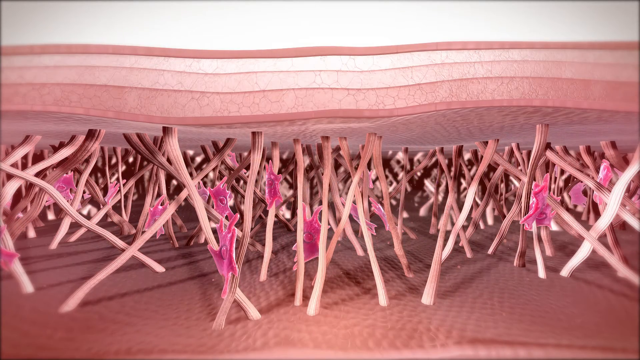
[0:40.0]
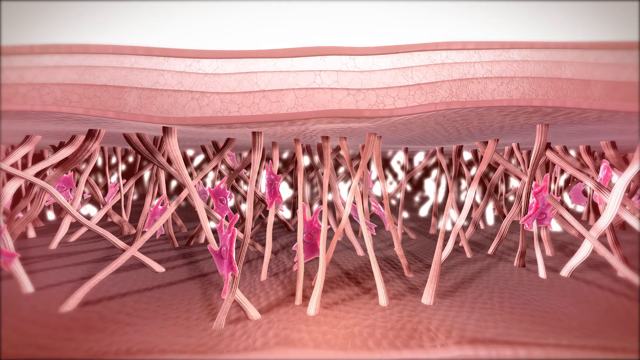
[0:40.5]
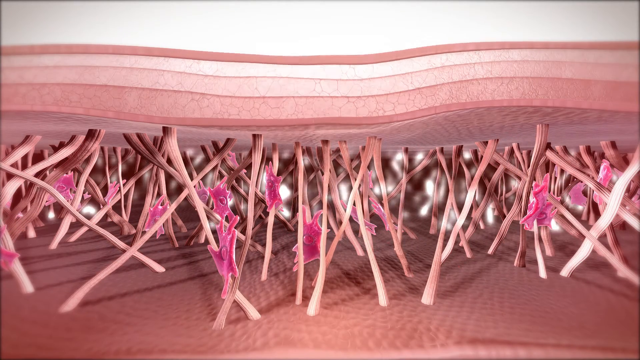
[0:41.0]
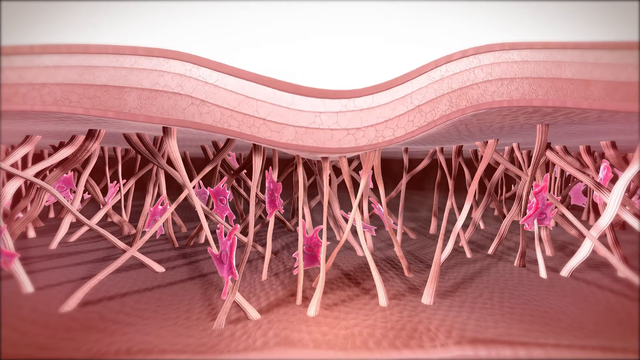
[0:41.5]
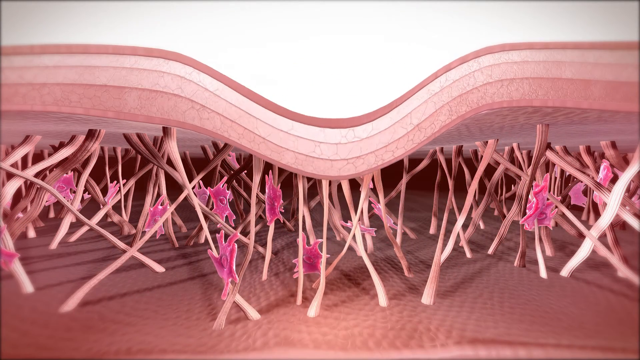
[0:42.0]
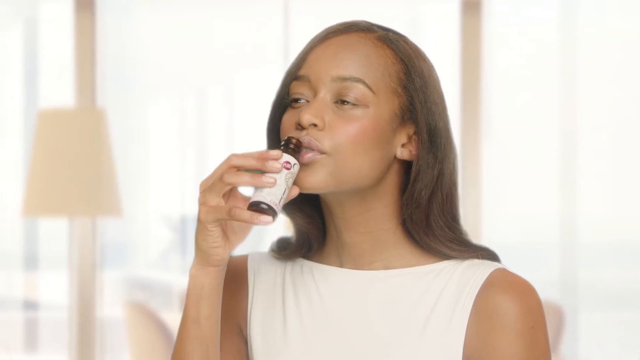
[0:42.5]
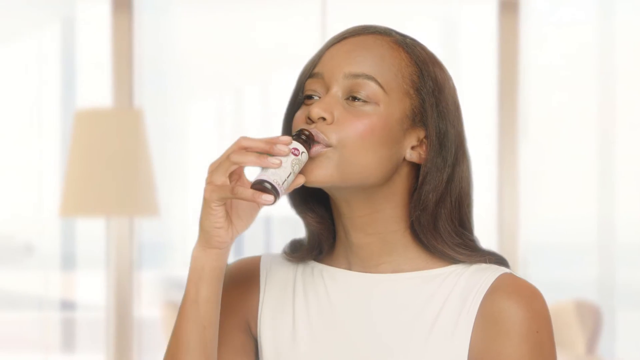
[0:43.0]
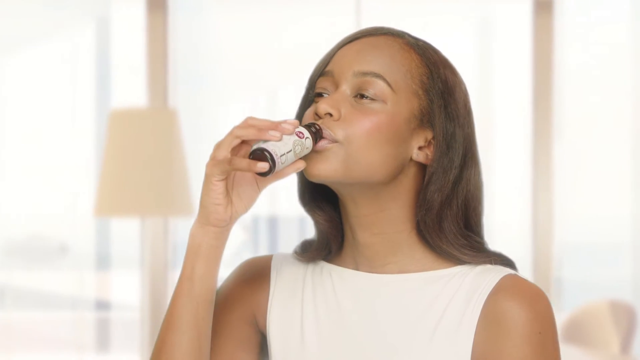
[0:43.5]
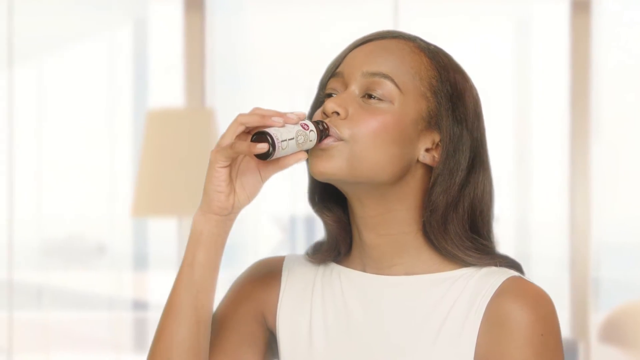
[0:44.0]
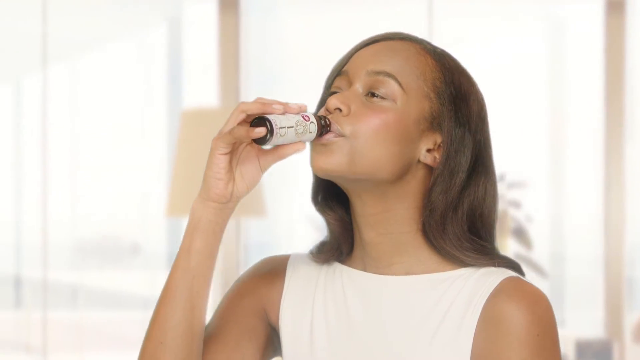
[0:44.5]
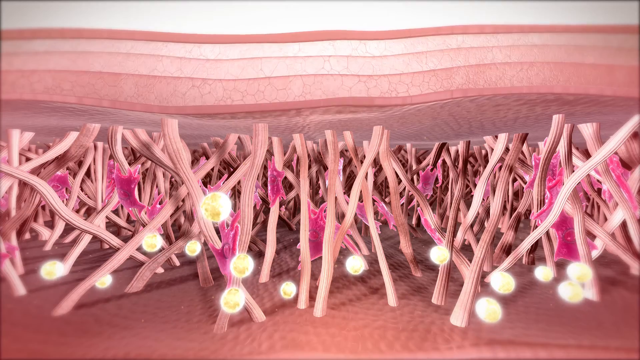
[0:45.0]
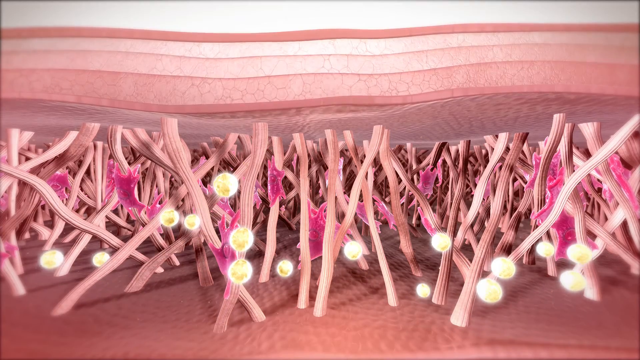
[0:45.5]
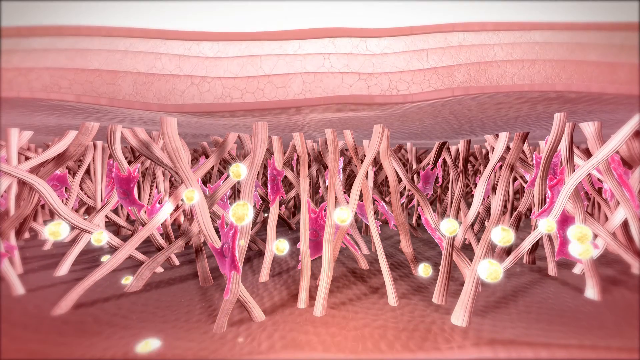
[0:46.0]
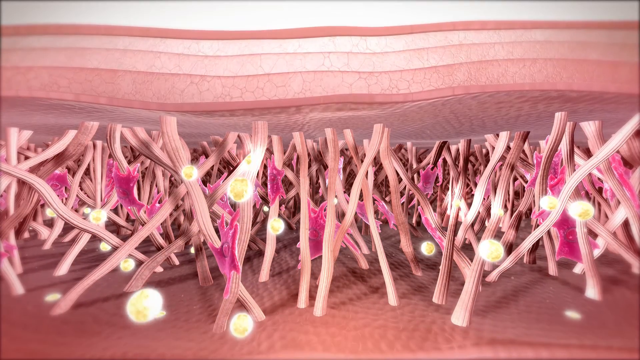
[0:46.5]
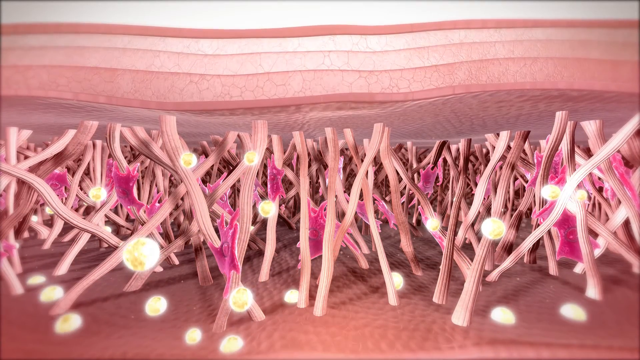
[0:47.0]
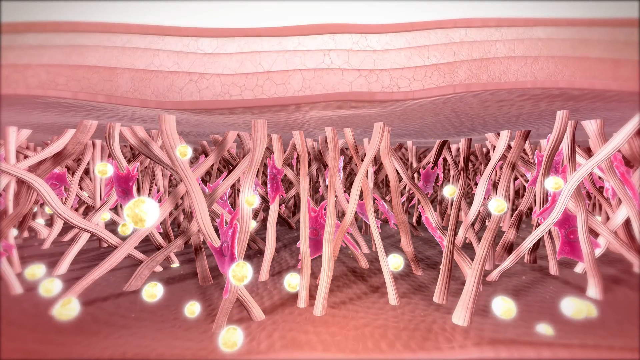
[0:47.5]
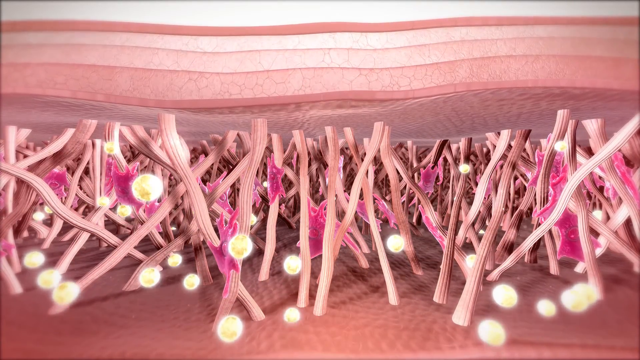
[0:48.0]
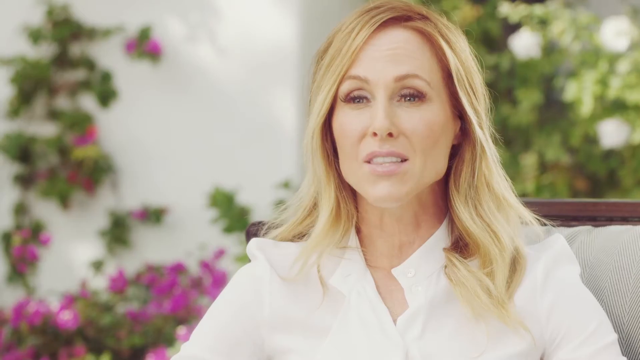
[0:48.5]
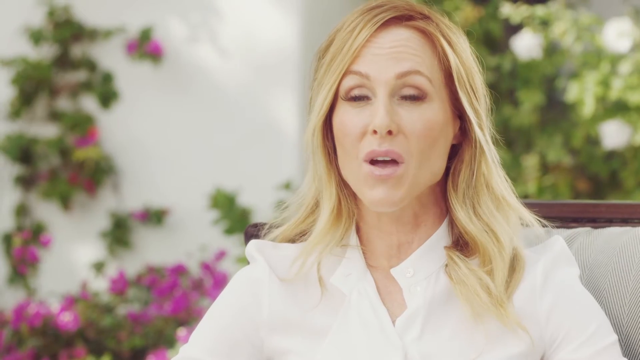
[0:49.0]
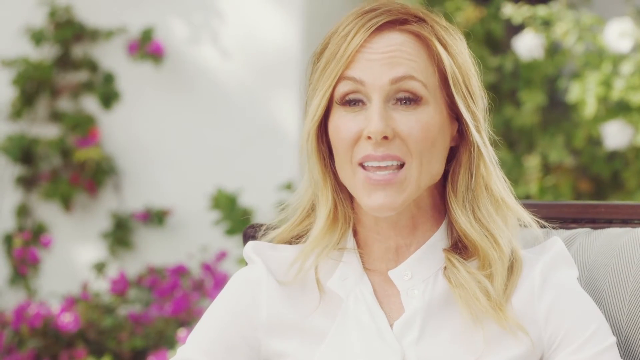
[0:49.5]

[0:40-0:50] The video shows what happens when the product is taken into the system. The black lady takes the potion, and it is shown flowing into her system, apparently bringing down a barrier and making the skin look fresh and nourished. Sarah is still shown speaking a little. A lady with very long hair appears.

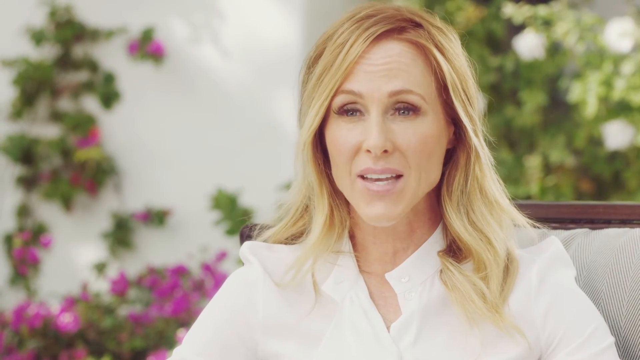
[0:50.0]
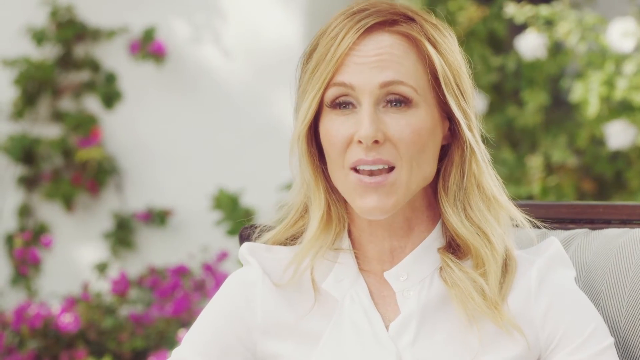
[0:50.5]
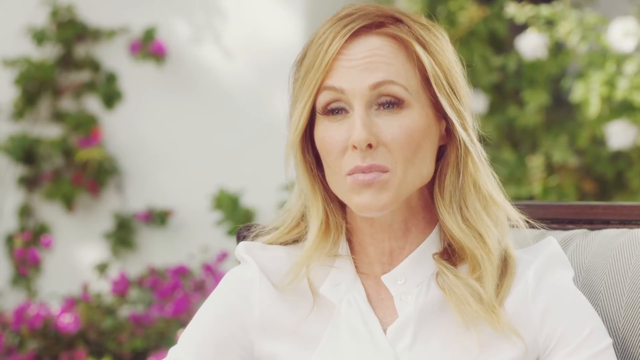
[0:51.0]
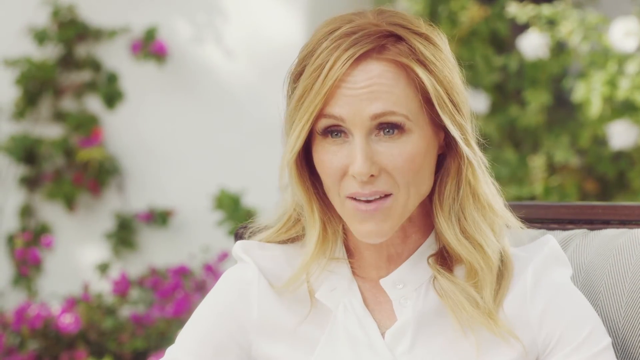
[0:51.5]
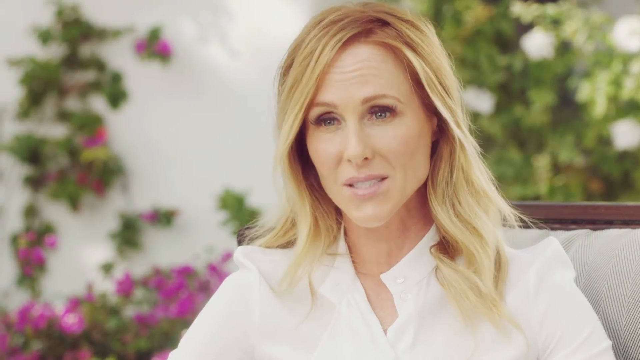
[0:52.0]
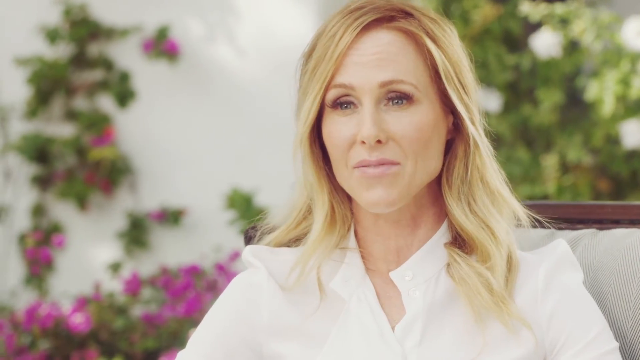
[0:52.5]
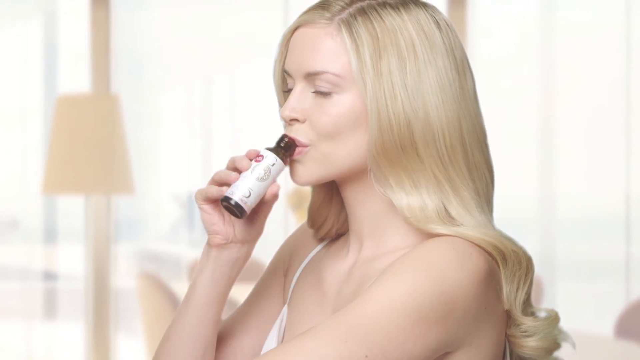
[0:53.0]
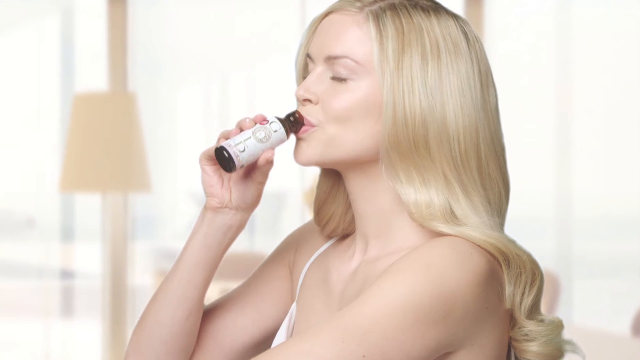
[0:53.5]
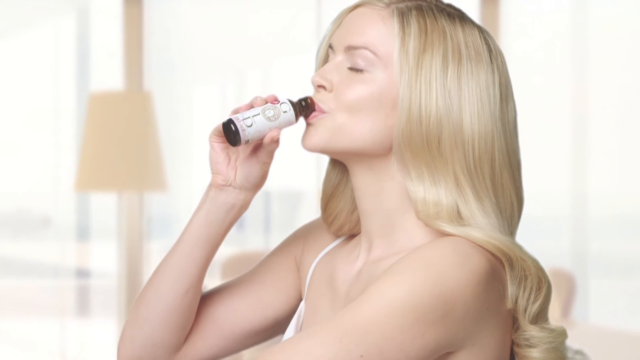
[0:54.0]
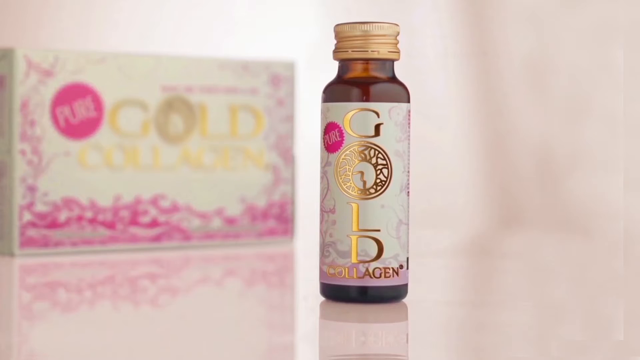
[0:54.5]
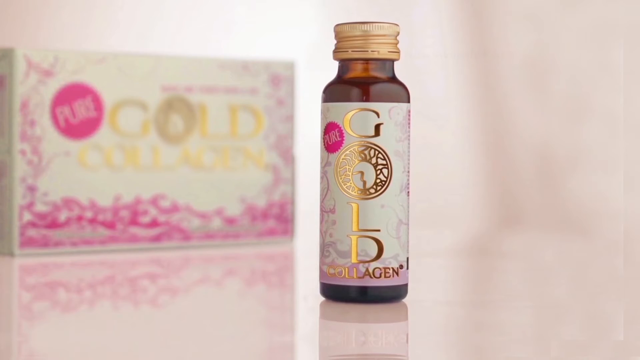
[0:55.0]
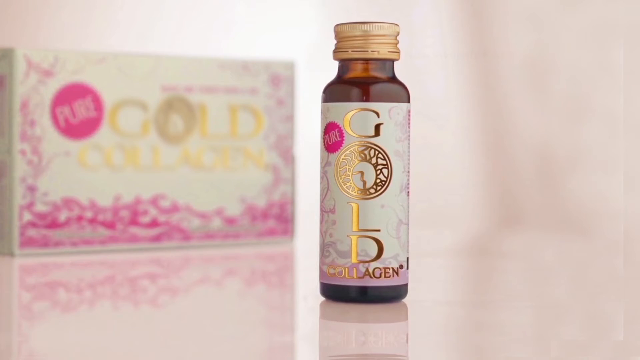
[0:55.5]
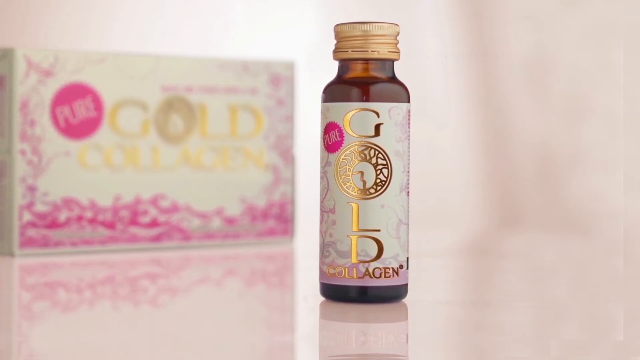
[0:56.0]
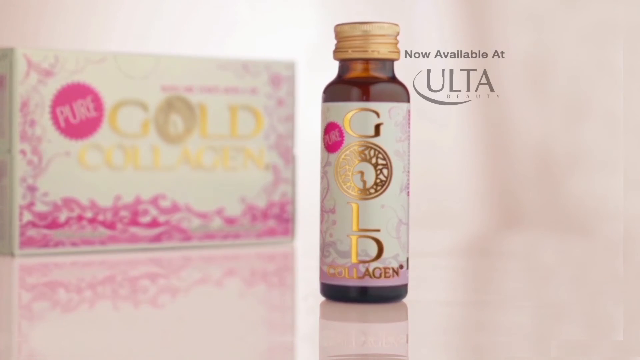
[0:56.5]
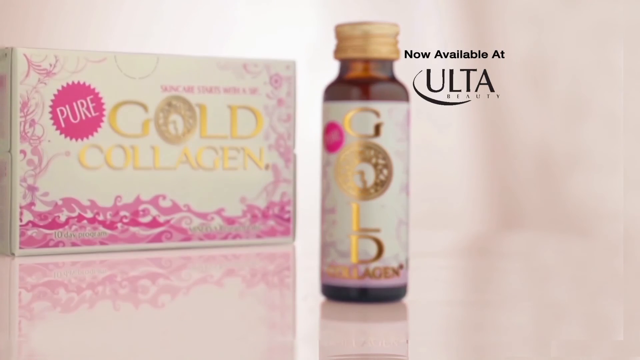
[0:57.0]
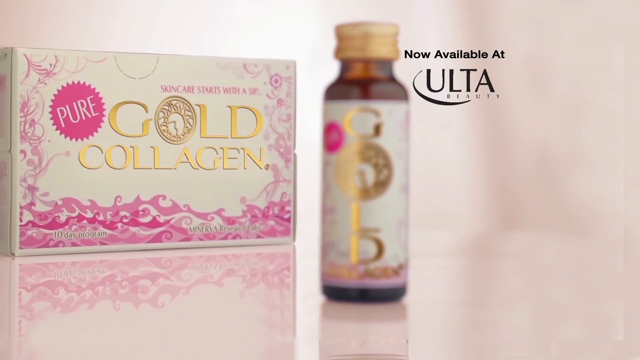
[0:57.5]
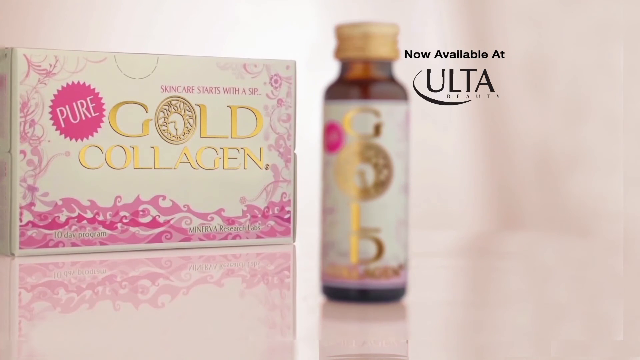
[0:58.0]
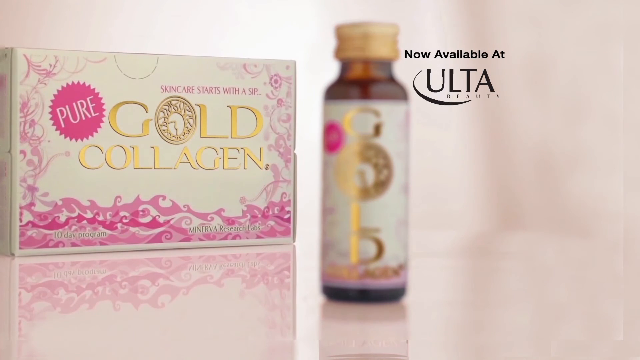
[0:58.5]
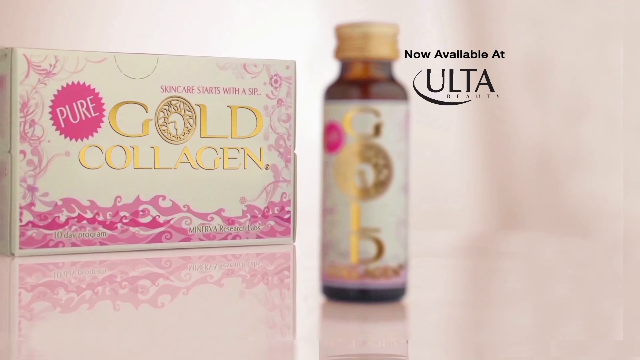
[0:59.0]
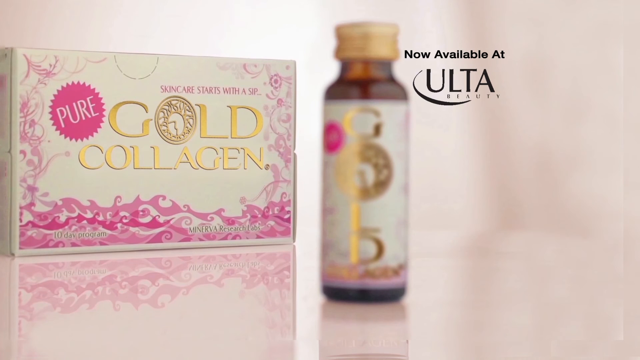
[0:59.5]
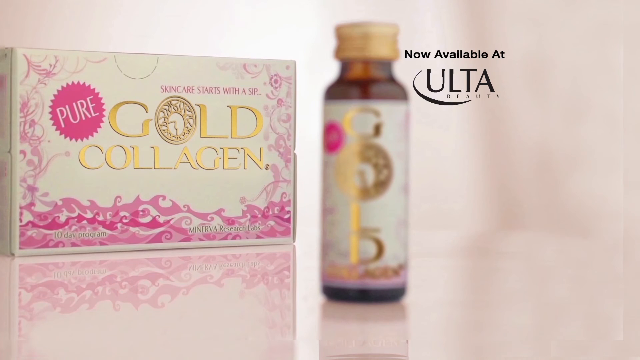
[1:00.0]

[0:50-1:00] Text states that the bottle in the lady's hand has been sold at top London retail shops, then reads "wake up to collagen for healthy young looking skin, healthy hair and nails," and says that for the first time in Europe it is being brought directly to you. It also states that the product, the liquid potion, decreases the appearance of wrinkles and promotes skin hydration, with results best seen after nine weeks based on their trial, that the statement has not been evaluated, and that the product is not intended to diagnose, treat, cure or prevent any disease. Sarah says results may vary. The doctor, Dr Nancy Scudfrey, says results are mostly seen in approximately six weeks and to consult your physician. The video shows the process of how the product works when taken into the system, with the black lady taking a potion, and Sarah speaks a little. It then goes back to the very first lady, who is taking a potion.